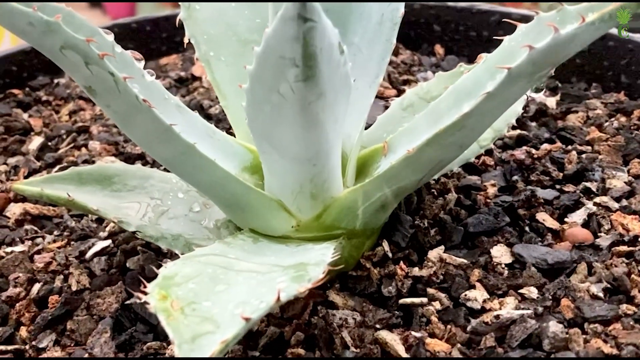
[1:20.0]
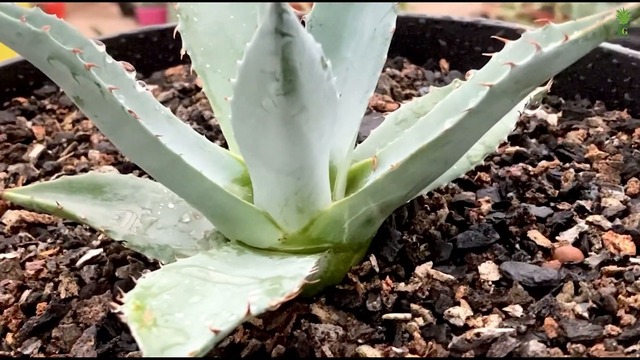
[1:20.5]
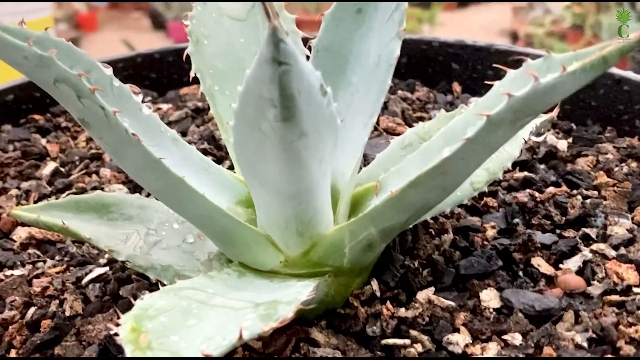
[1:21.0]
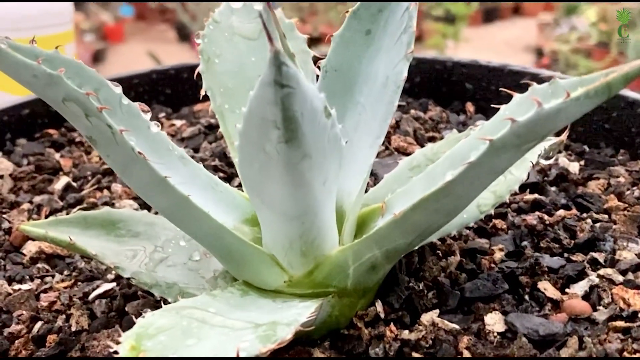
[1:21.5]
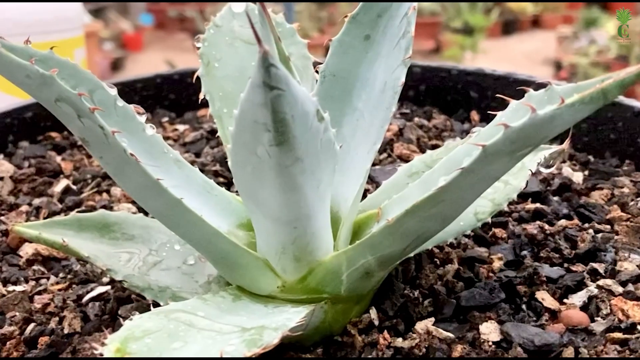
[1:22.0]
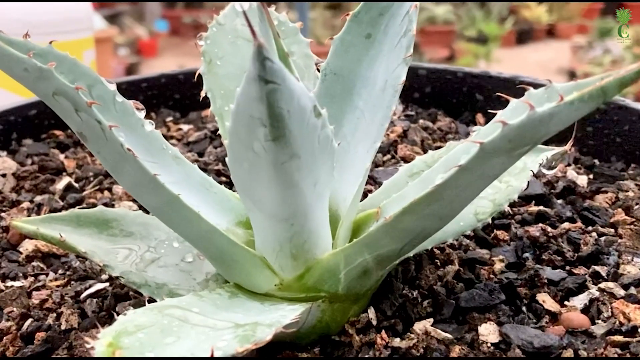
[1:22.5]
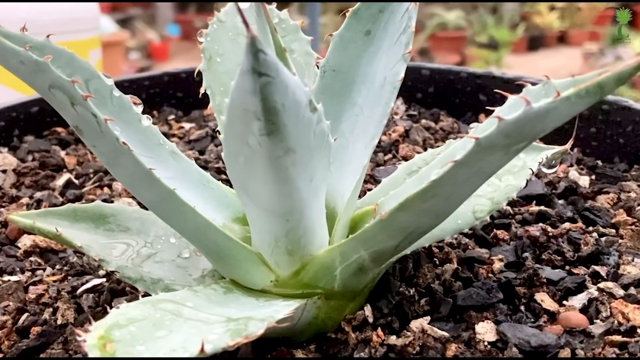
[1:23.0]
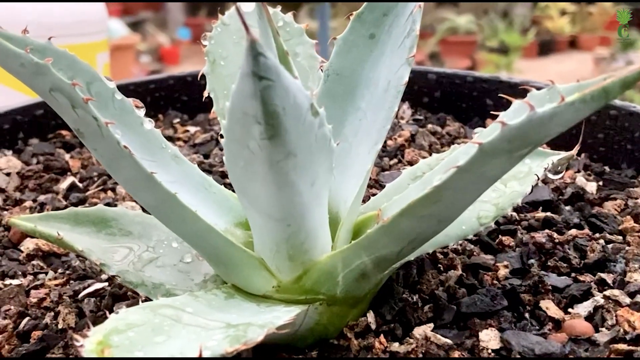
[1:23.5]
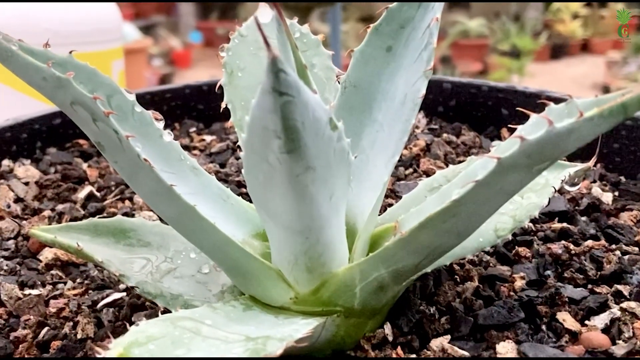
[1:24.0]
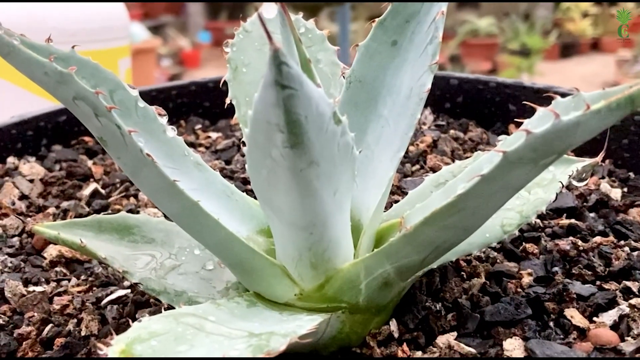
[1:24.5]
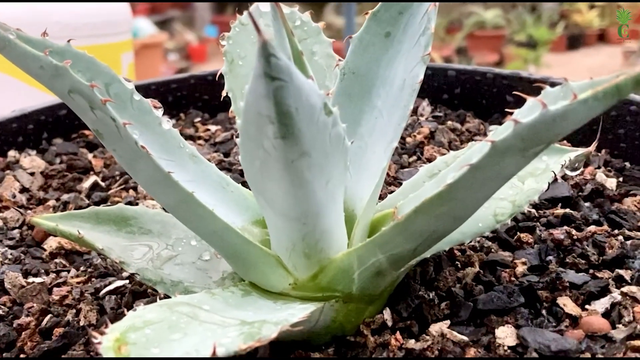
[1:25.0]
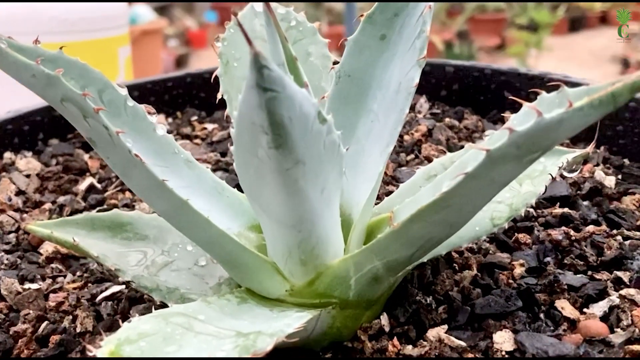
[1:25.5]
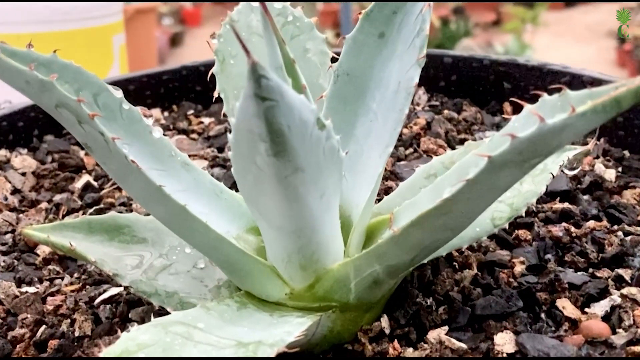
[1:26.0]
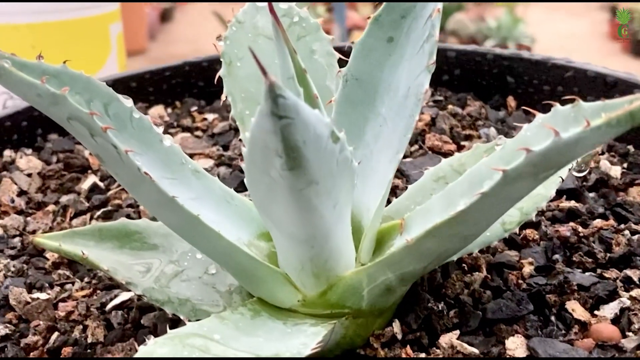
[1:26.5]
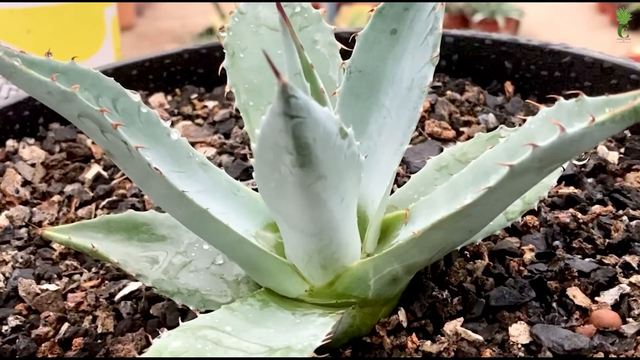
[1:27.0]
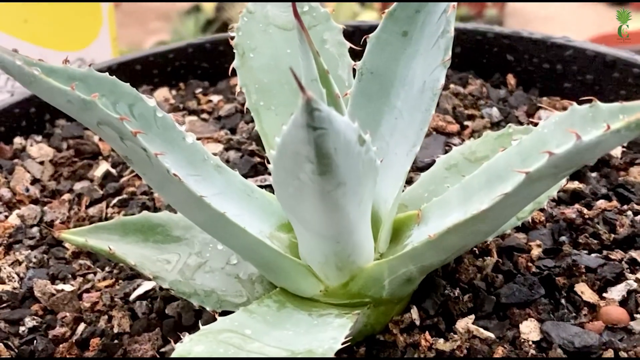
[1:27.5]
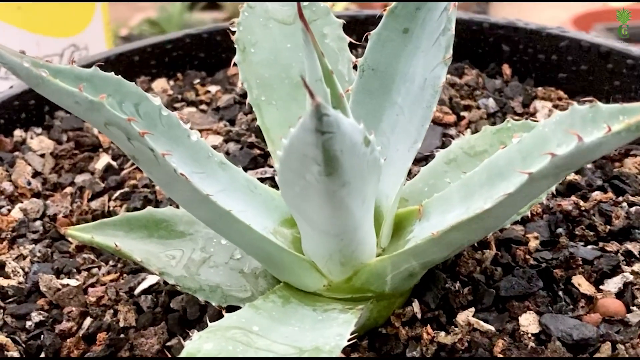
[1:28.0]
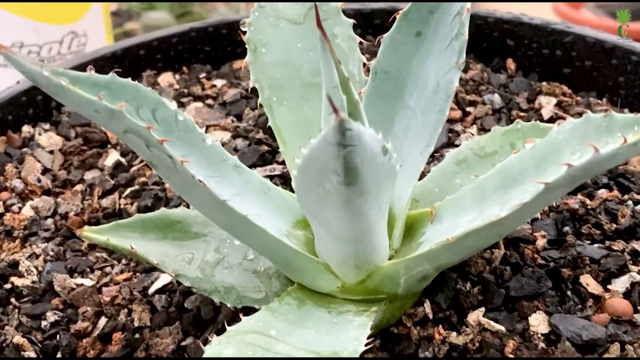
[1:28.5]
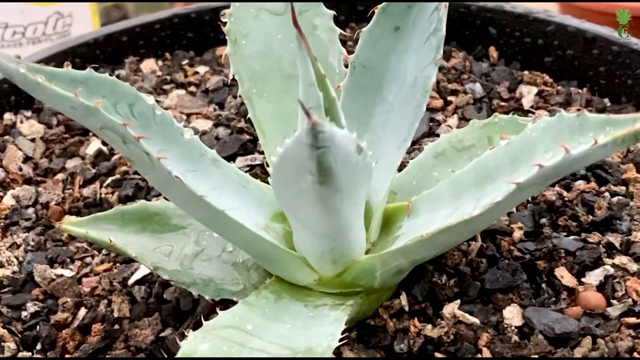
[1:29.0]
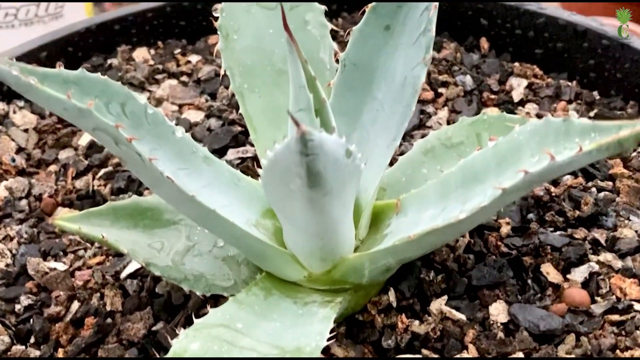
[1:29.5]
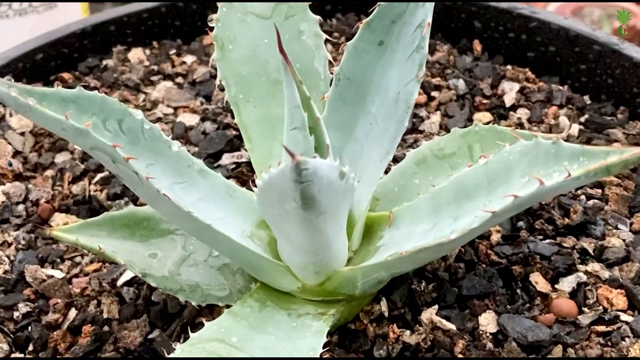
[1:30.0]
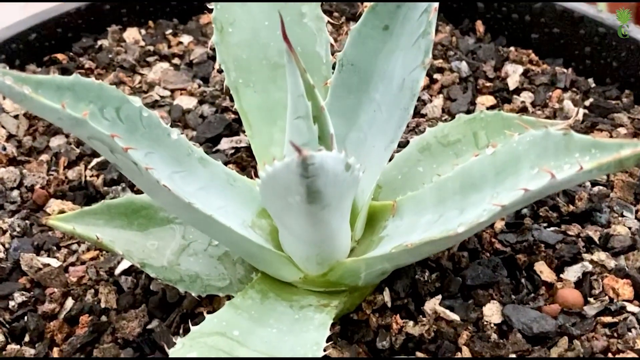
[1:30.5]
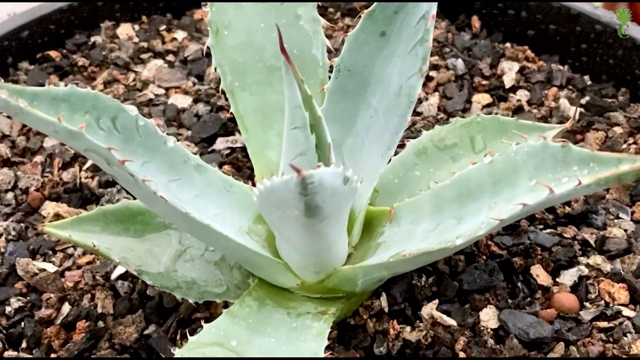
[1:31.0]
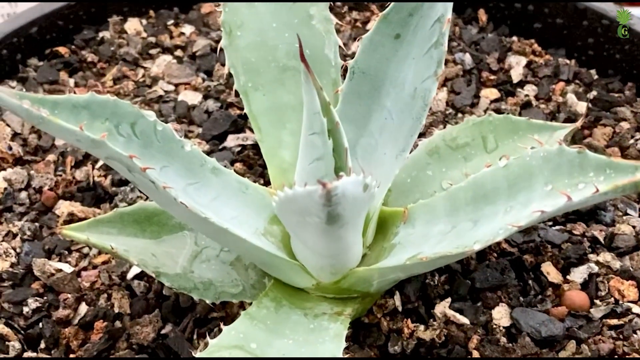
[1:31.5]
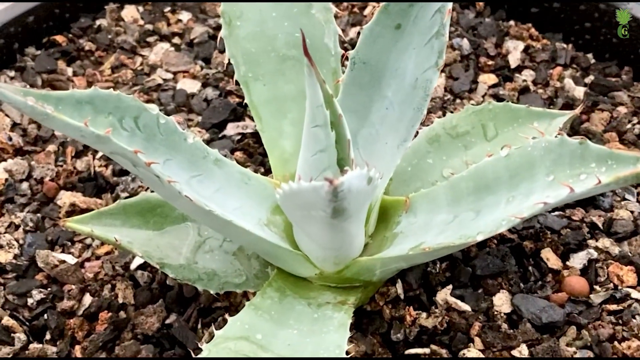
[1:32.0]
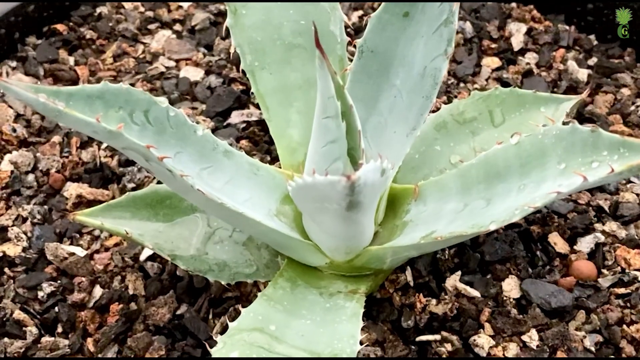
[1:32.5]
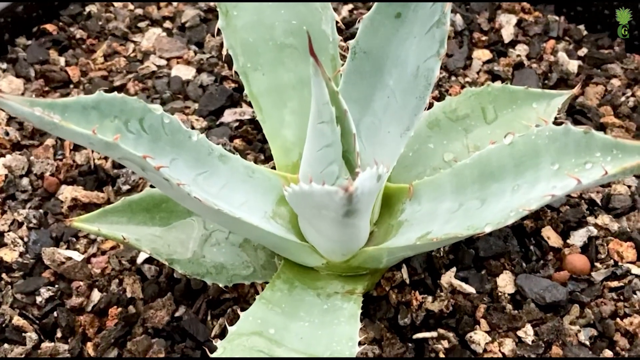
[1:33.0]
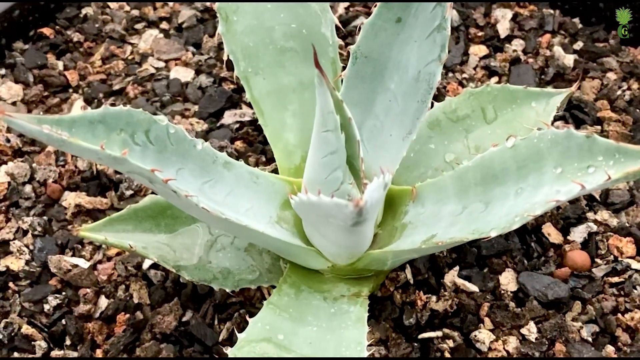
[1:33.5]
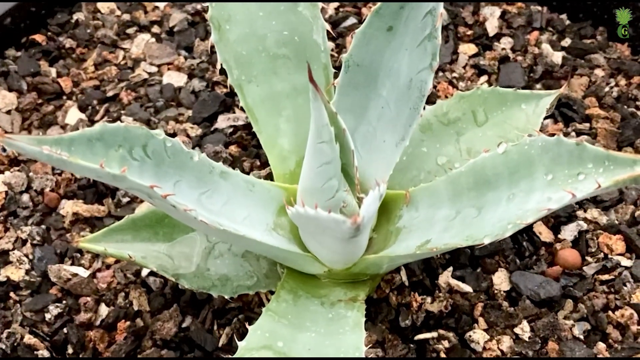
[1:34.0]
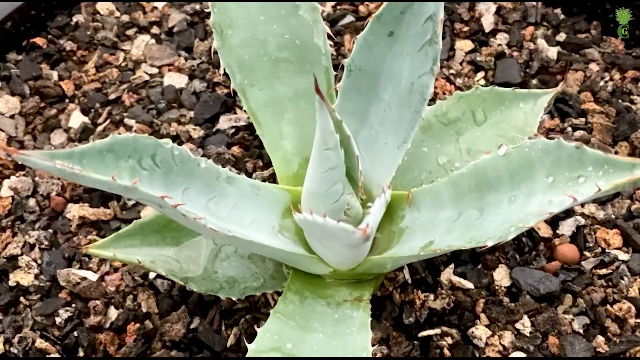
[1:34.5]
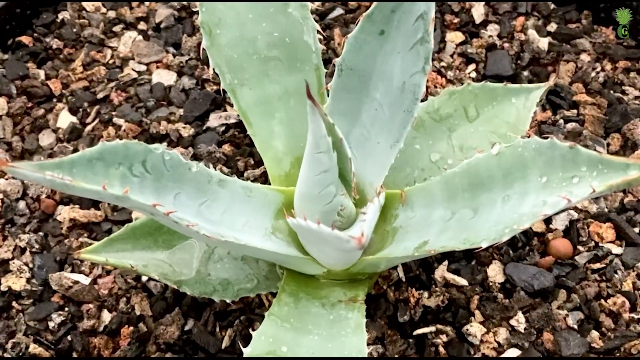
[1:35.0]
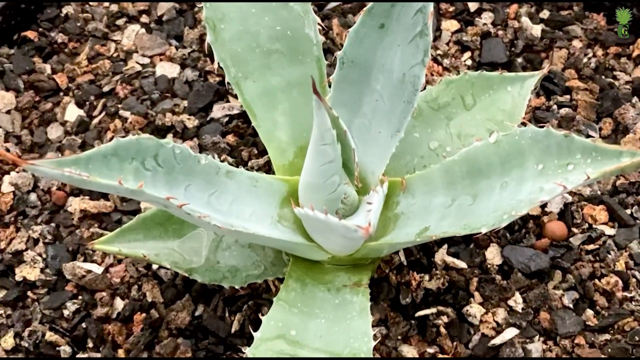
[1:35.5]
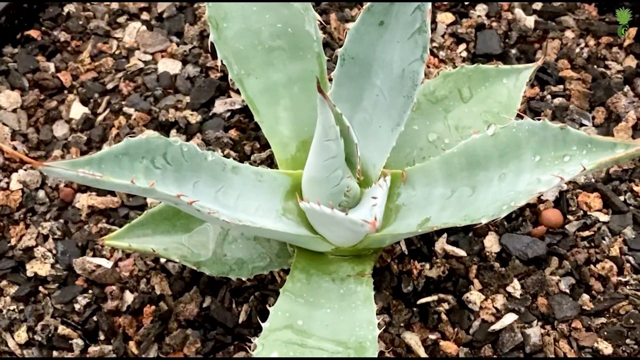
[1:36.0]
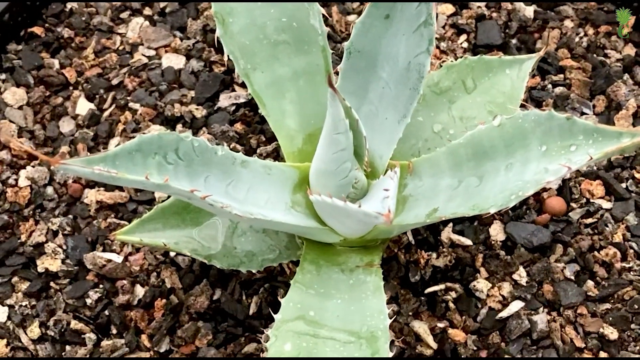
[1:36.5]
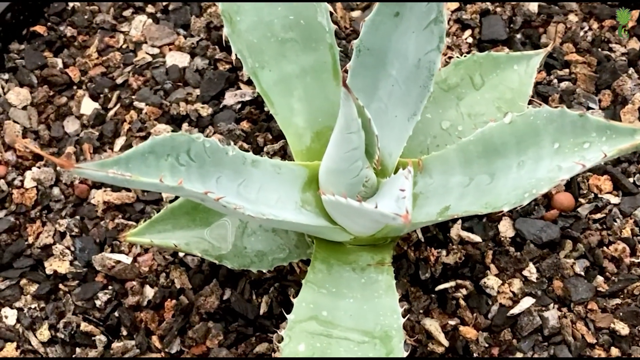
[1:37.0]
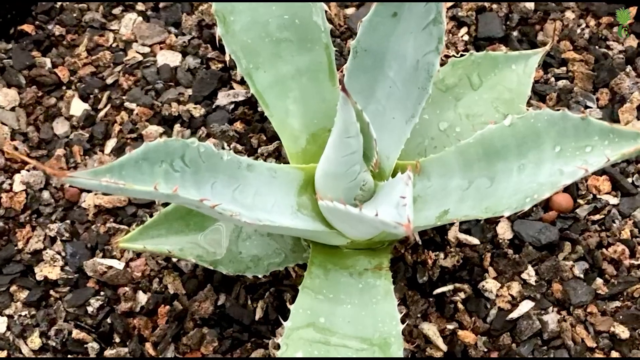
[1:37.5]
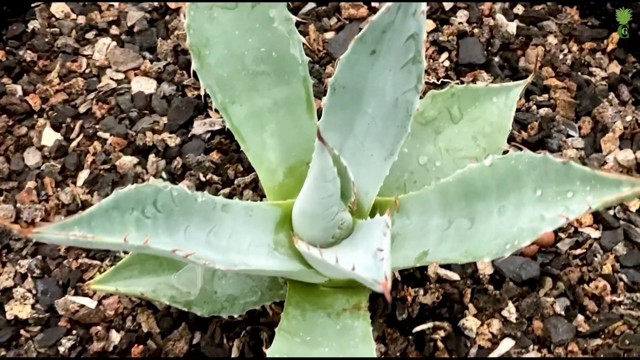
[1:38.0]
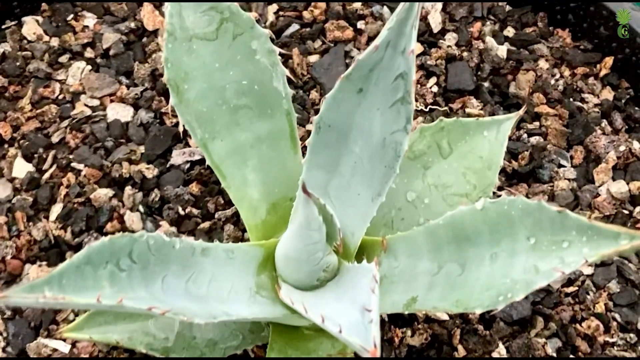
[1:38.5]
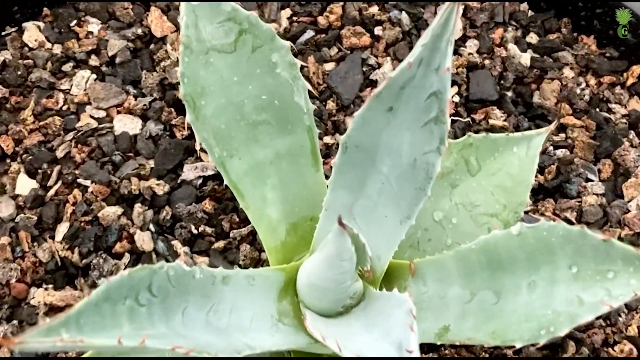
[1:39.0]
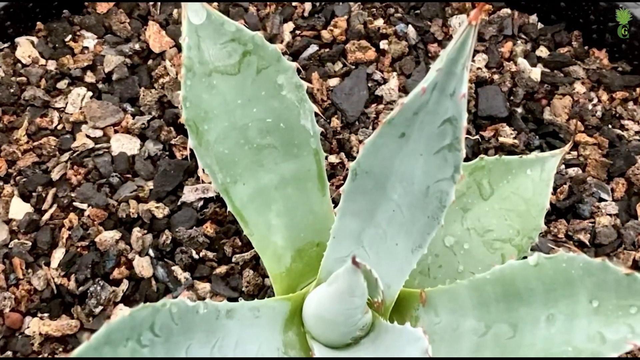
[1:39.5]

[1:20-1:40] The camera zooms into the succulent for a close-up, then moves downwards. In the background on the left is a white plastic container with a yellow label on it; it is unclear whether it is a bottle of liquid or a plastic bucket with a powder in it, possibly plant food or fertilizer. Also in the background, pots of different sizes with different plants in them are all along the floor in a row; some are a terracotta colour and others seem to be black or dark brown. On the left there is what looks like a red bucket or container and something bright light blue, maybe gardening tools.